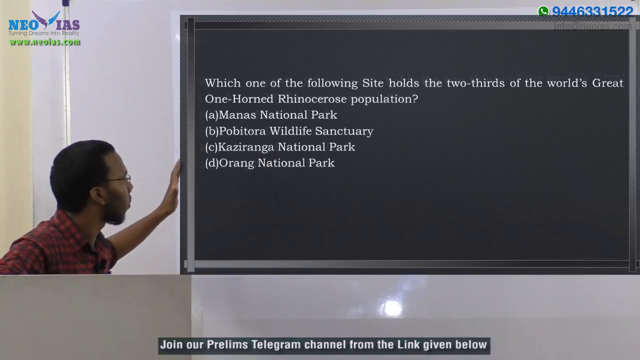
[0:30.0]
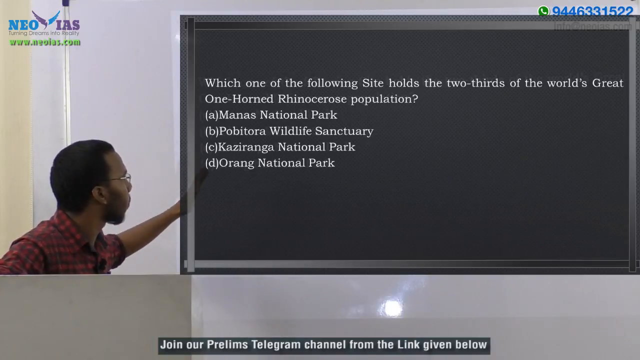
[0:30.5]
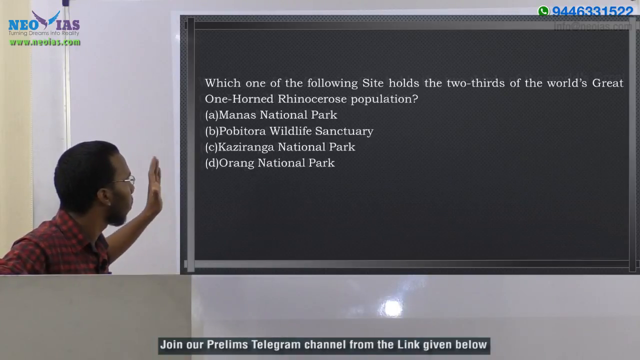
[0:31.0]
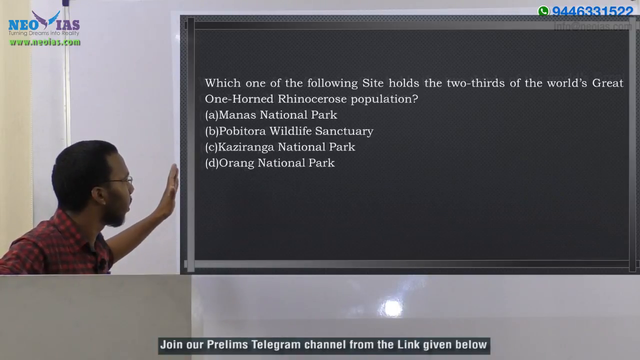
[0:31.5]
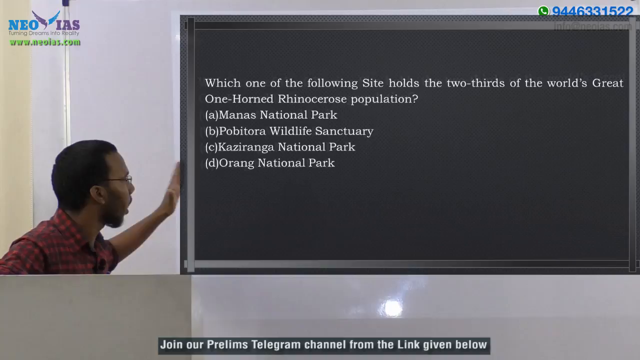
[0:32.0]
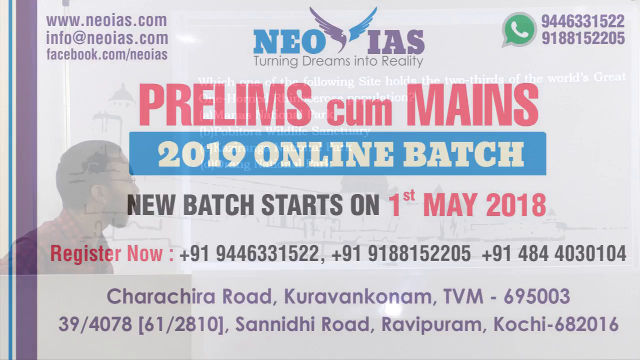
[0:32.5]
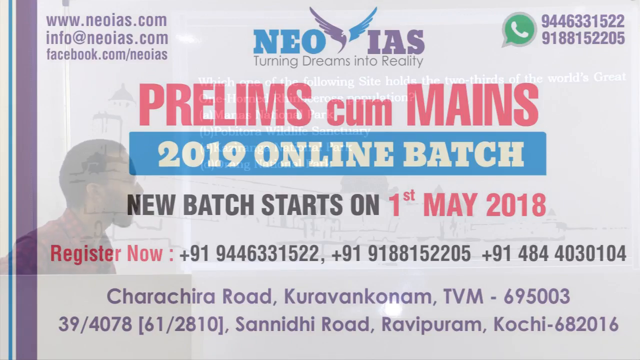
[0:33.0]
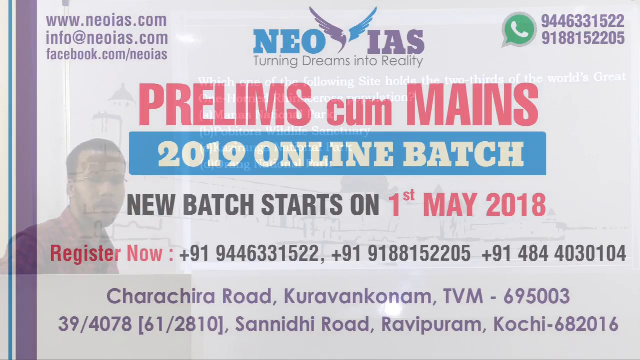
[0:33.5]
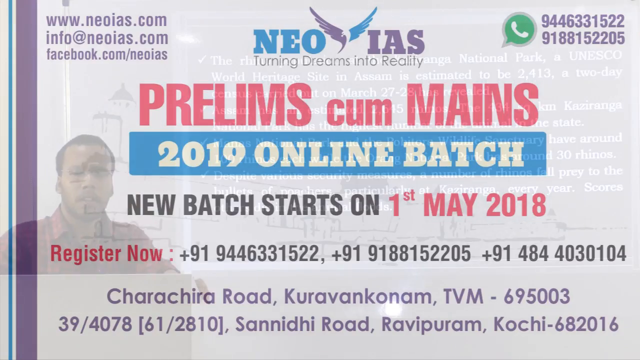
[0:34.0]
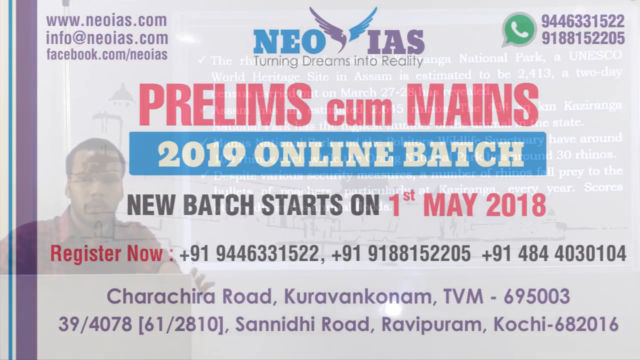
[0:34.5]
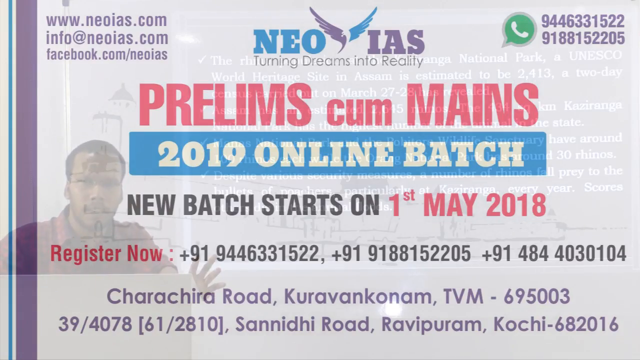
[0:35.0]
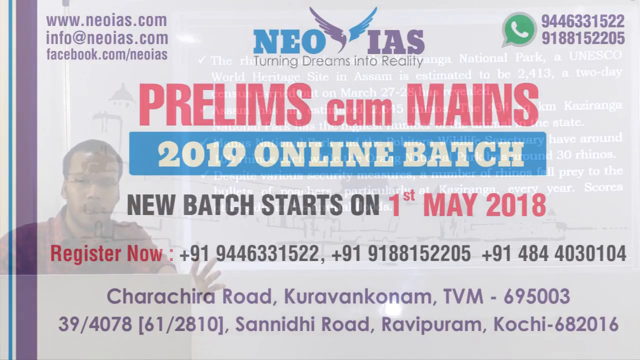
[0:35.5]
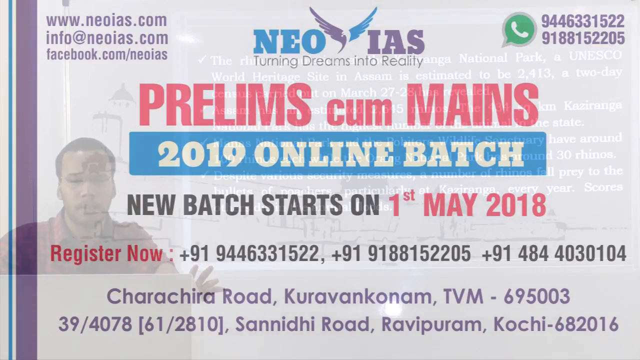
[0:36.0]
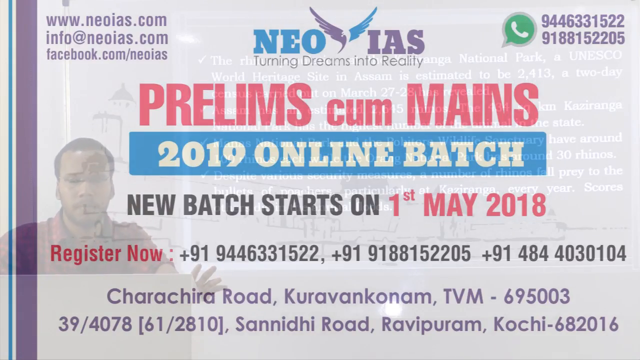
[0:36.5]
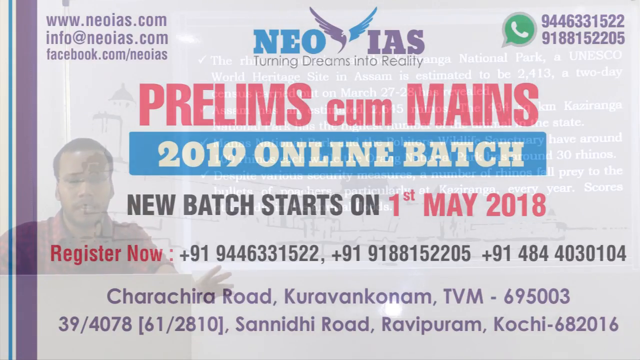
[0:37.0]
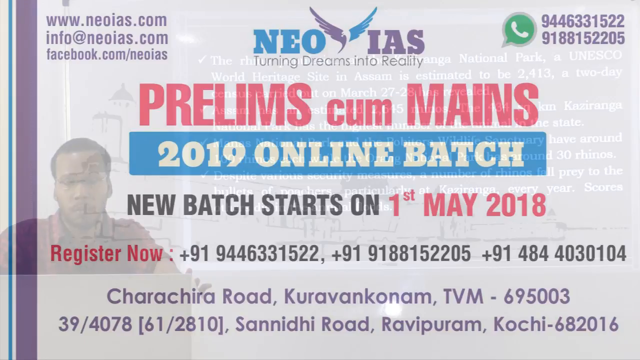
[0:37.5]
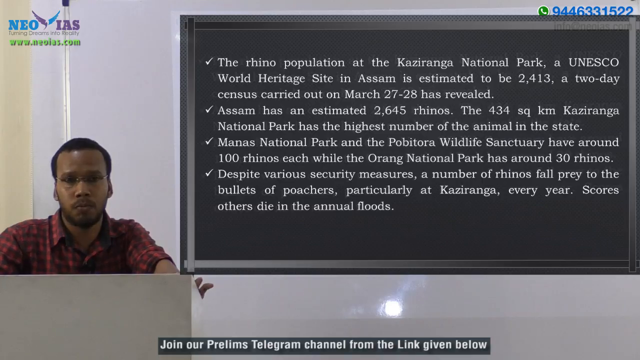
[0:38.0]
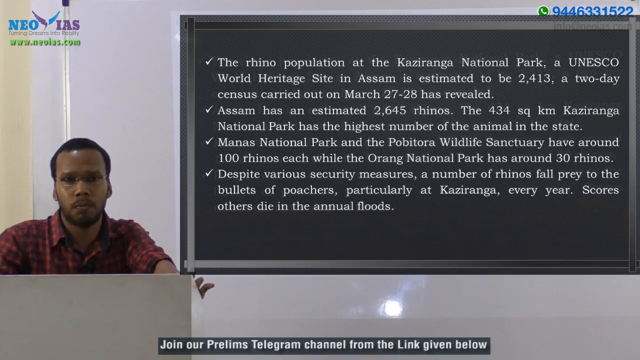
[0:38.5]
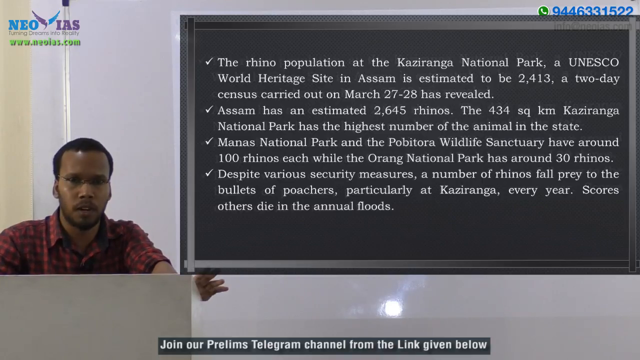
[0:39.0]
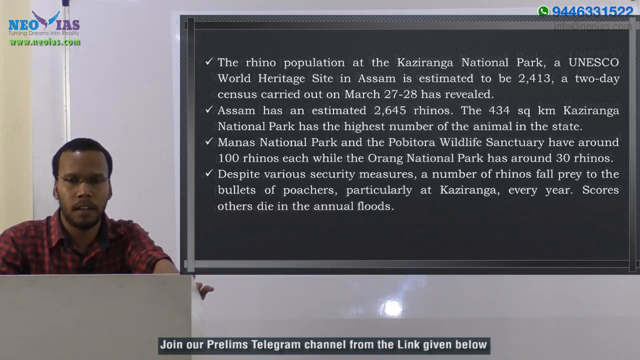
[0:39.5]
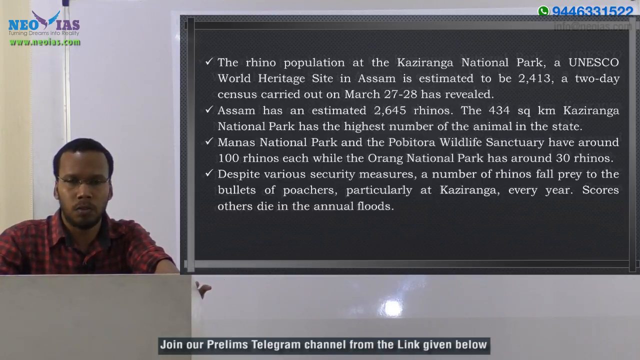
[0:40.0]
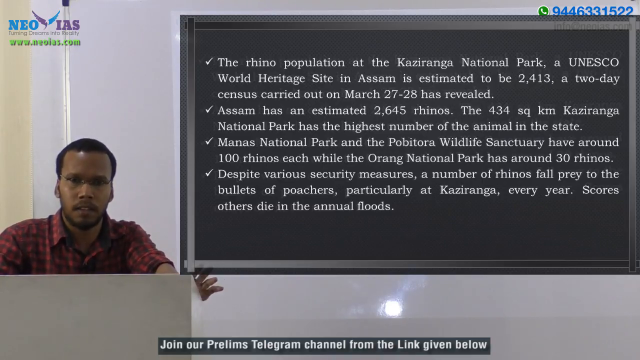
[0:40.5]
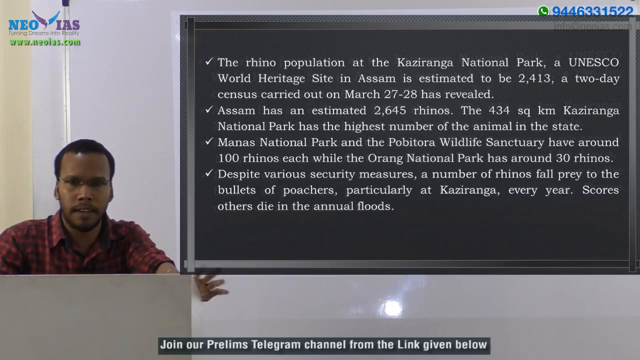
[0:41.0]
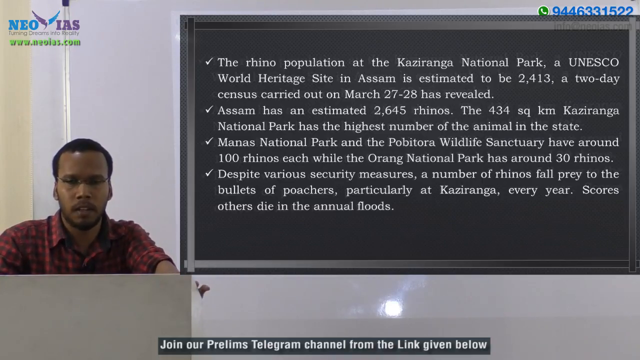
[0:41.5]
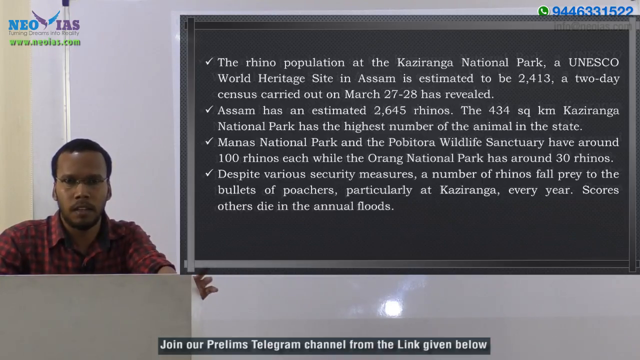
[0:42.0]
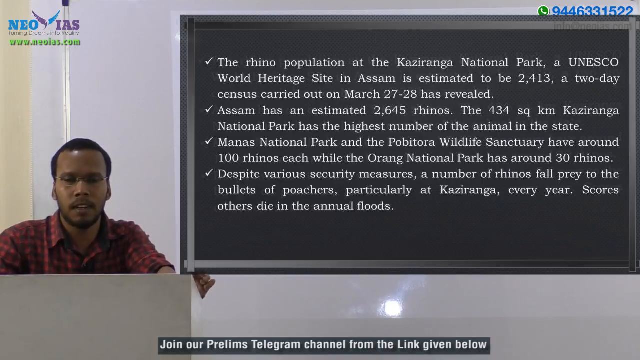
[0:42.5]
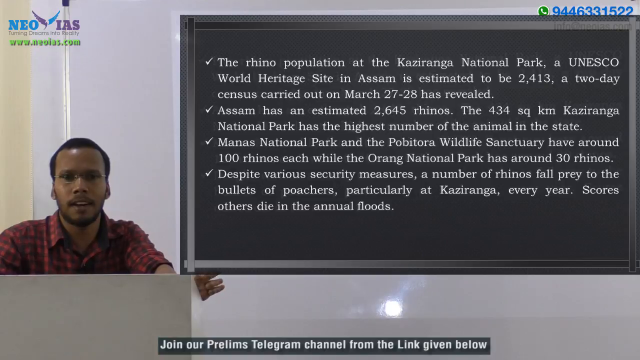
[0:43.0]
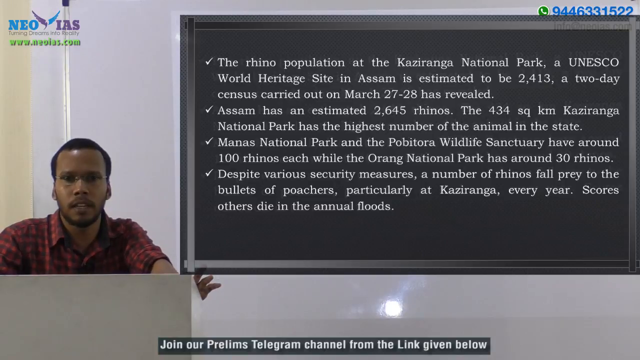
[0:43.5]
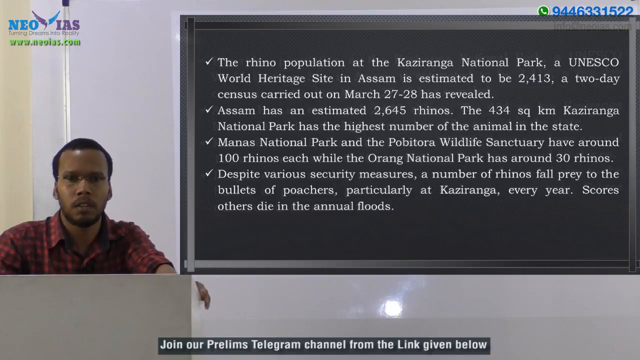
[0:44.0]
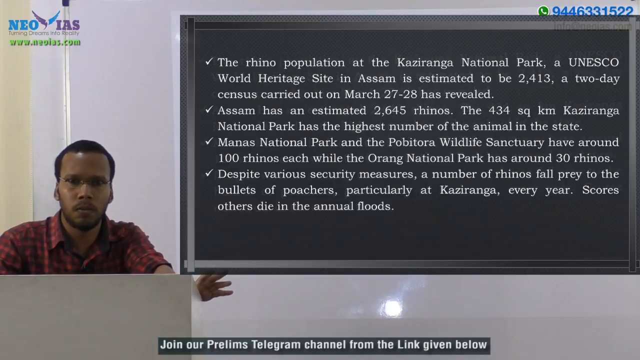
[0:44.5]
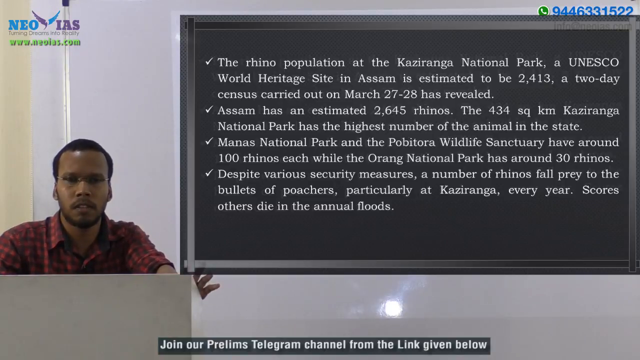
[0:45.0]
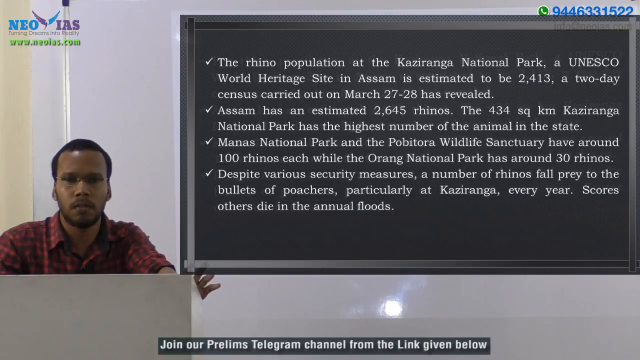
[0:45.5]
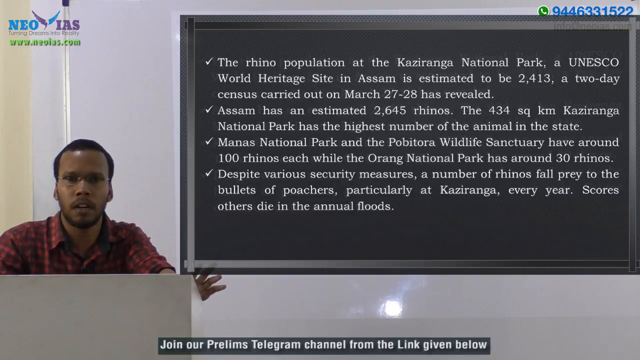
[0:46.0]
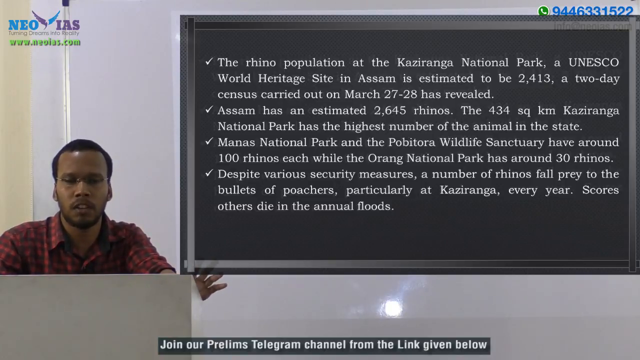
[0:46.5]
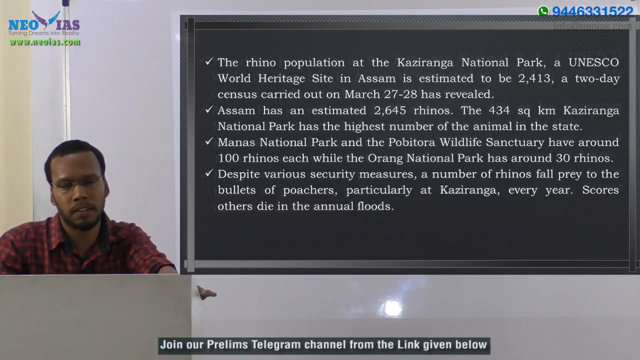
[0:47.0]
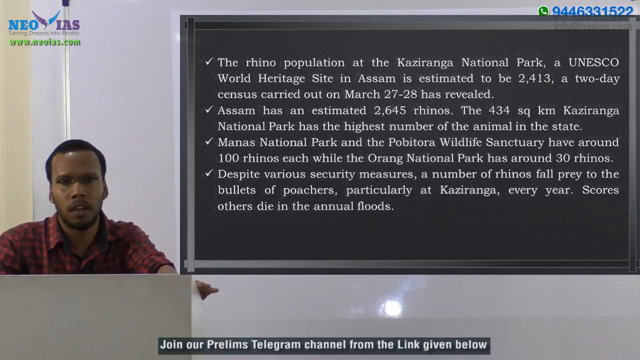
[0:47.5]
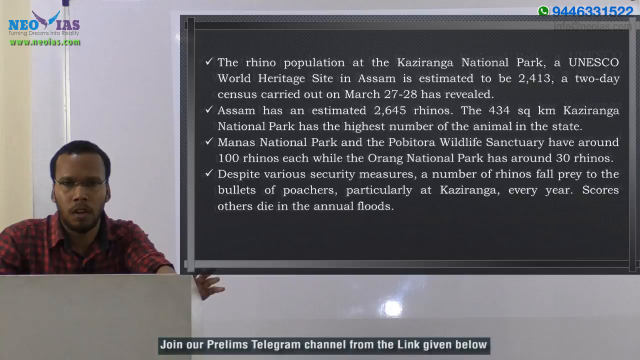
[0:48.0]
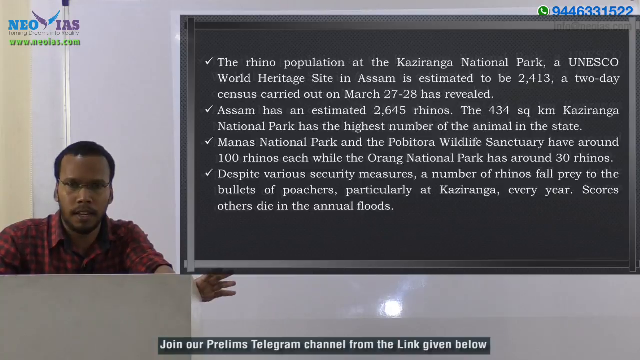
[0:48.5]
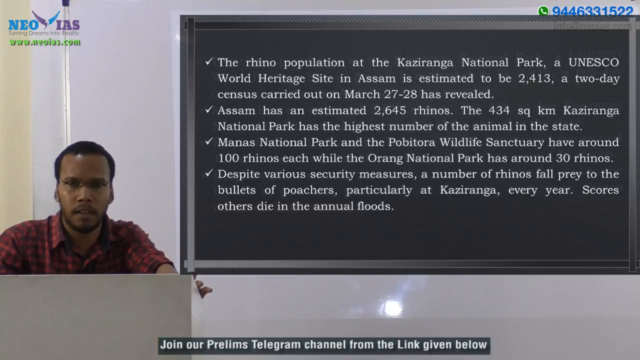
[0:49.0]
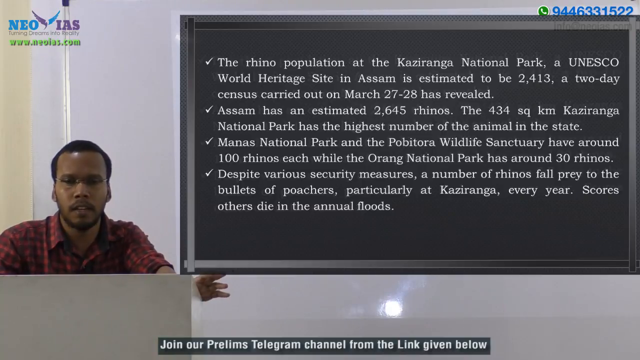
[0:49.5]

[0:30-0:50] A young black man in a red t-shirt is in the left corner of the video, facing the wall, apparently toward a board, and reading information to the audience. In front of him is something like a computer, and he is seated. He appears to be in a classroom with a white wall and a yellow wall. A blackboard spans almost the entire video from the right side to the left and contains the information he is sharing. In the top right there is a phone number and a WhatsApp icon, and in the top left corner there is a logo. He keeps sharing the information while facing the board. A pamphlet then appears on the screen with contact information: an email, a Facebook page, a website, a logo, many phone numbers, and apparently a physical address. He faces the camera again and keeps talking directly to the viewers.